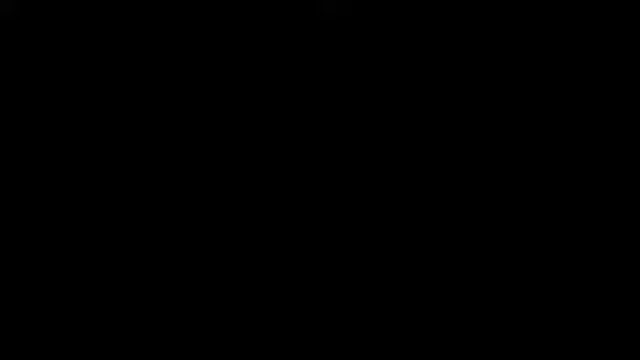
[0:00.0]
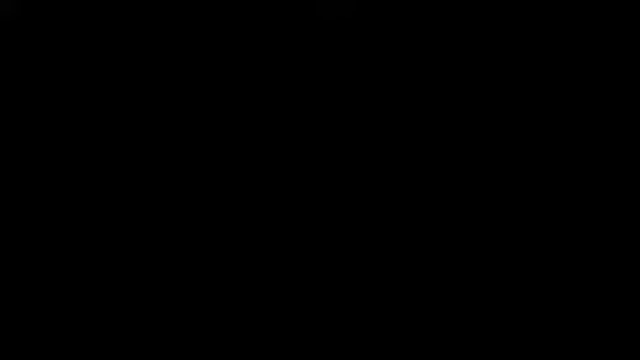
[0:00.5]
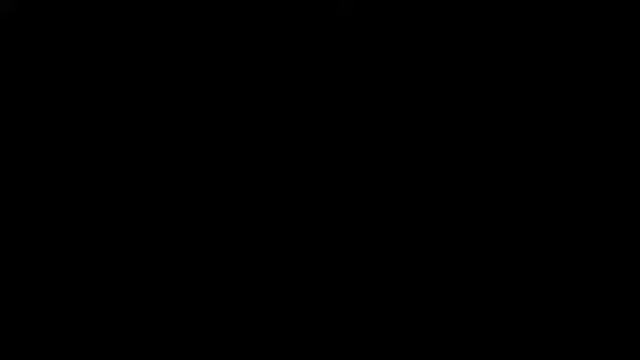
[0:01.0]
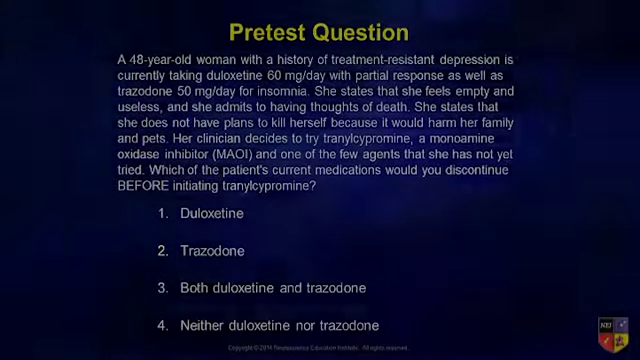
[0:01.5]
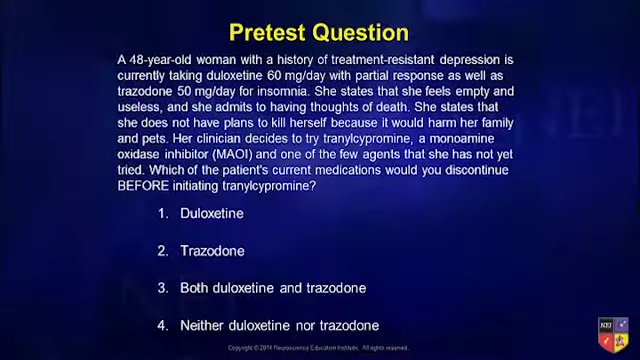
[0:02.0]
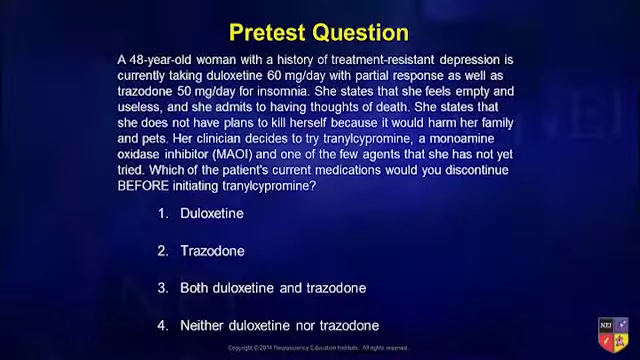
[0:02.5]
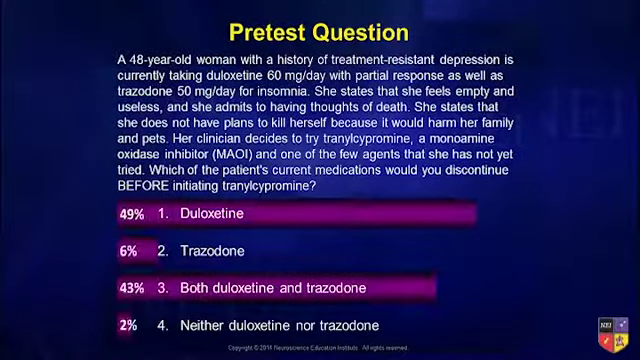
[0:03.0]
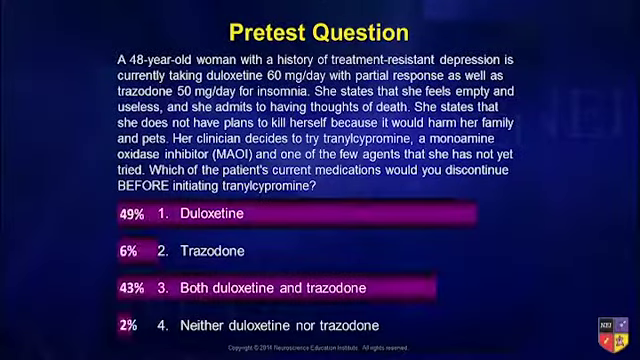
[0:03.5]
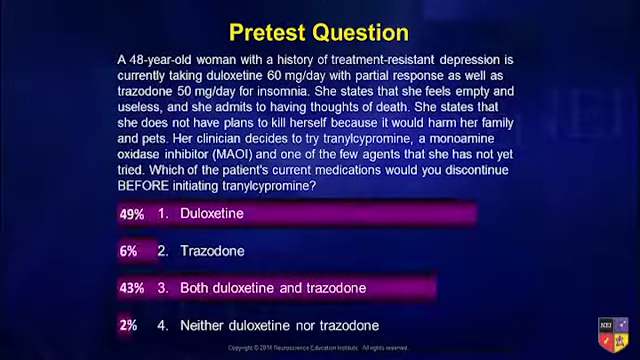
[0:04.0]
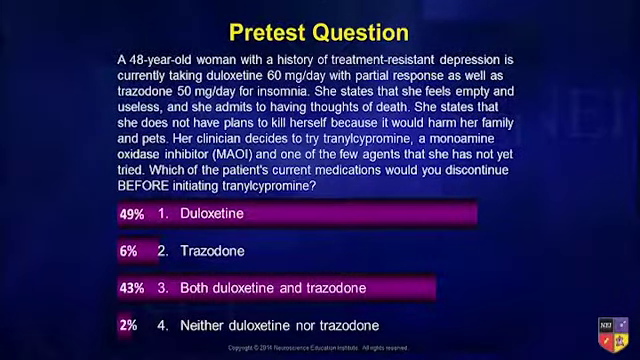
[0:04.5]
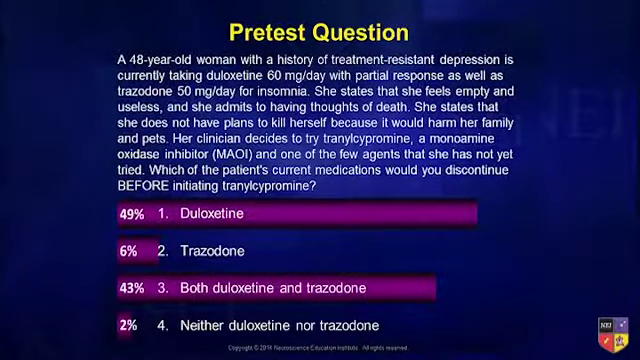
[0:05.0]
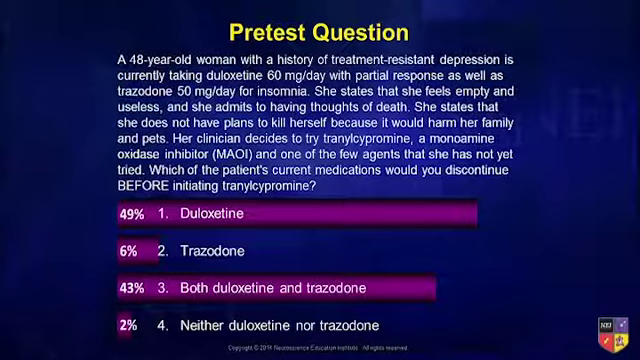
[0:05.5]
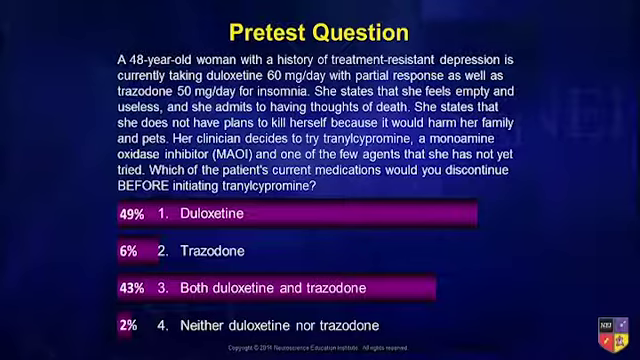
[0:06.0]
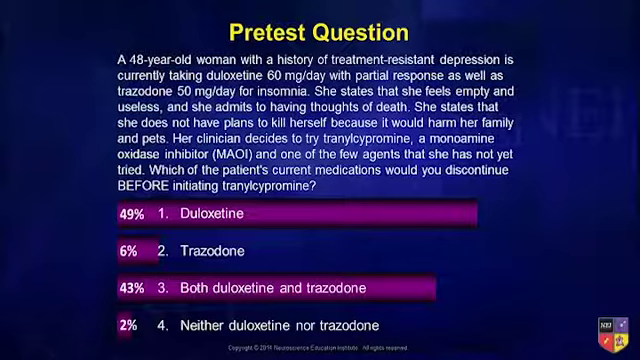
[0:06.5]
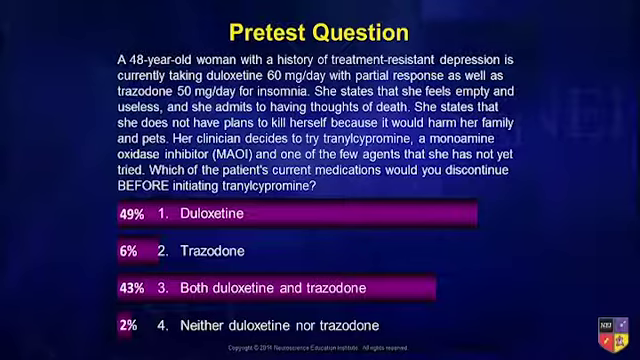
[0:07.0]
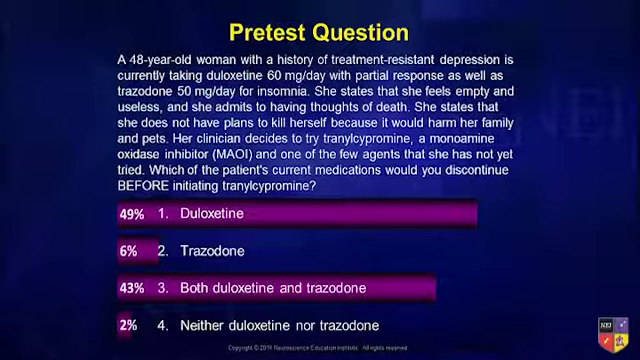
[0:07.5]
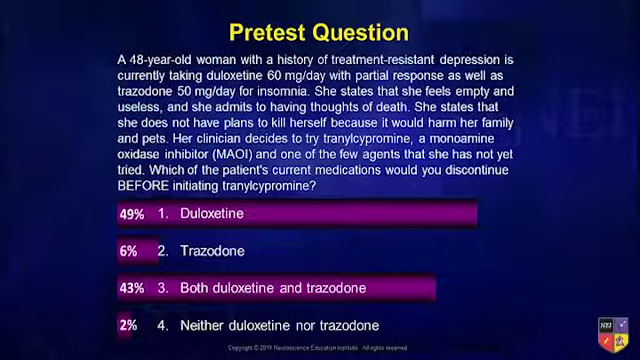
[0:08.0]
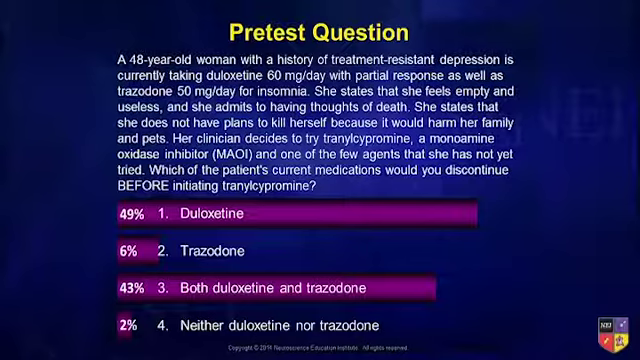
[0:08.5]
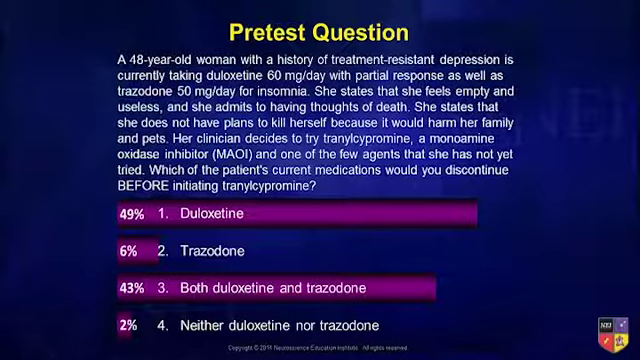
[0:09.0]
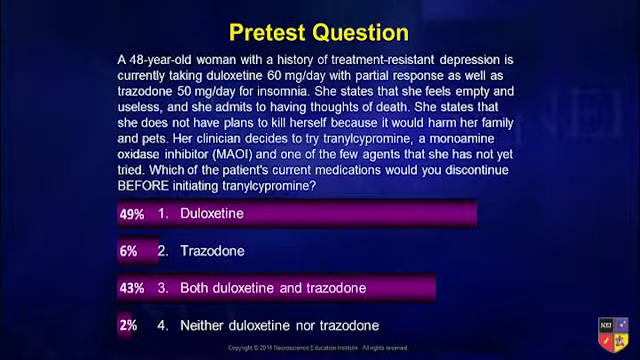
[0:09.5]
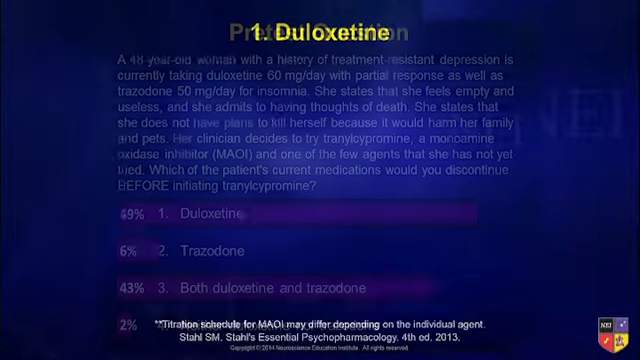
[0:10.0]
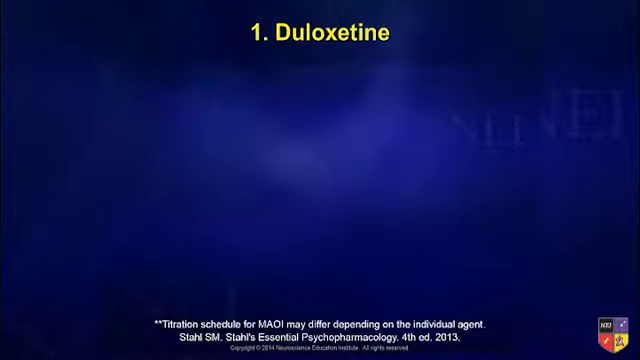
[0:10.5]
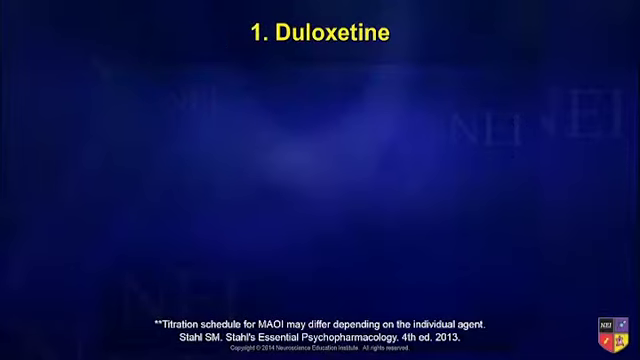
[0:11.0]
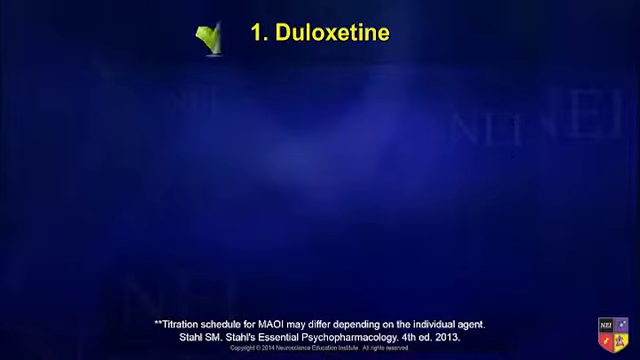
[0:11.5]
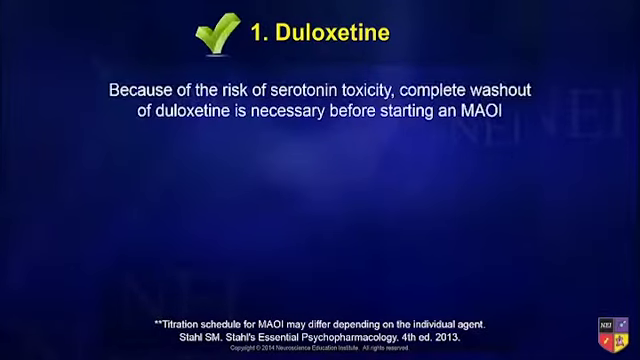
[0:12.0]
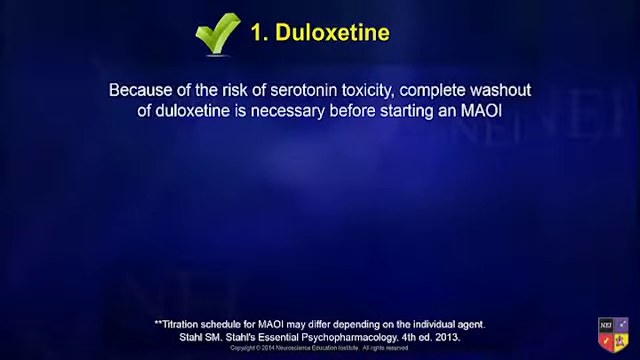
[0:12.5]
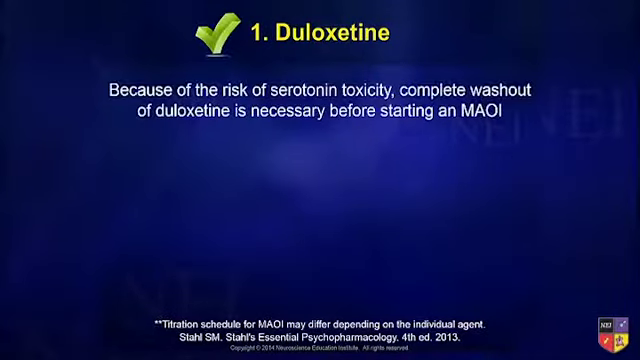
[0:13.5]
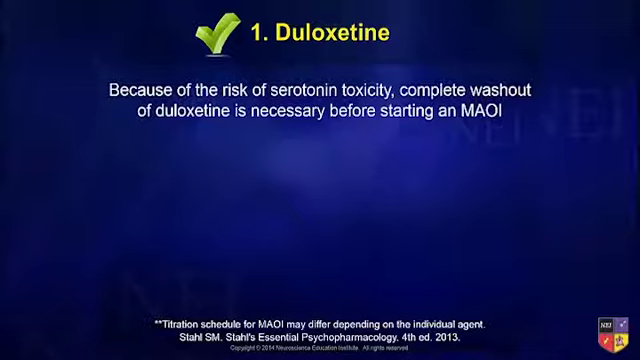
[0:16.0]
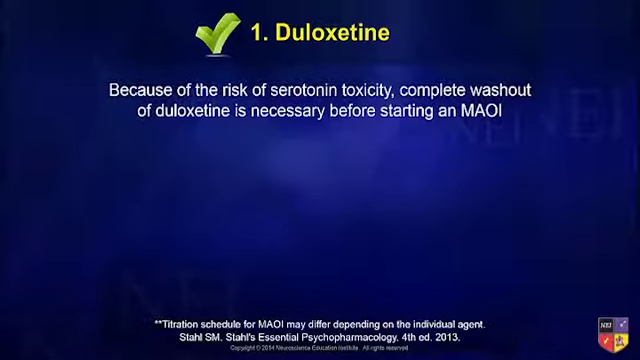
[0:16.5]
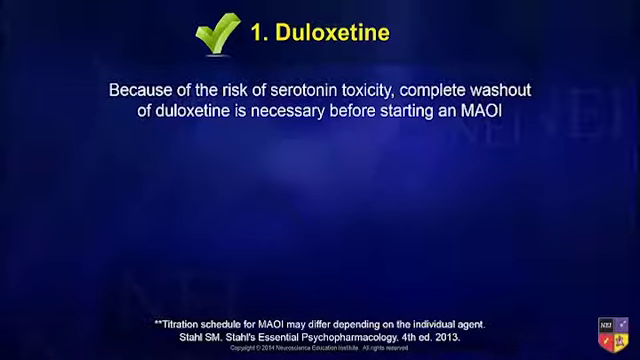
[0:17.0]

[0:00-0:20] A blue screen shows yellow text at the top reading "pre-test question", with white text underneath that reads: "a 48 year old woman with a history of treatment resistant depression is currently taking duloxetine 60 milligrams per day with partial response as well as trazodone 50 milligrams per day for insomnia. She states that she feels empty and useless and she admits to having thoughts of death. She states that she does not have plans to kill herself because it would harm her family and pets. Her clinician decides to try tranylcypromine, a monoamine oxidase inhibitor, MAOI, one of the few agents that she has not yet tried. Which of the patient's current medications would you discontinue before initiating tranylcypromine?" Beneath this block of text are four options: "1 duloxetine", "2 trazodone", "3 both duloxetine and trazodone" and "4 neither duloxetine nor trazodone". After a second, pink bars appear showing how respondents voted: 49% for duloxetine, 6% for trazodone, 43% for option 3 and 2% for option 4. Yellow text at the top then reveals "1 duloxetine", and a green animated tick appears next to it. Underneath, white text appears reading "because of the risk of serotonin toxicity, complete washout of duloxetine is necessary before starting an MAOI." Small white disclaimer text is at the bottom of the screen.